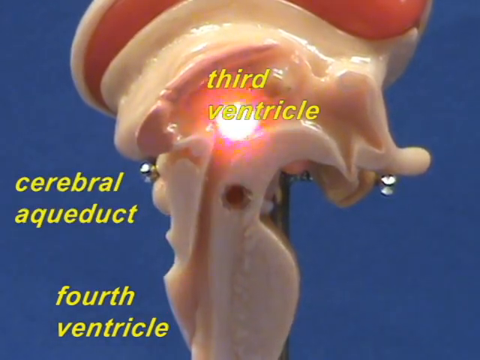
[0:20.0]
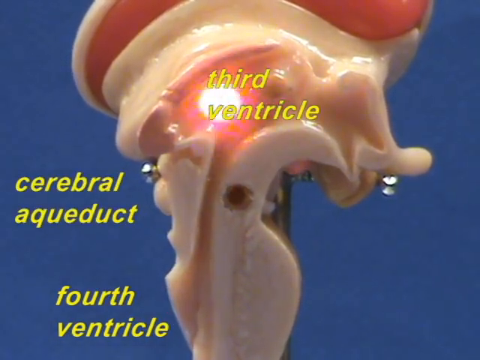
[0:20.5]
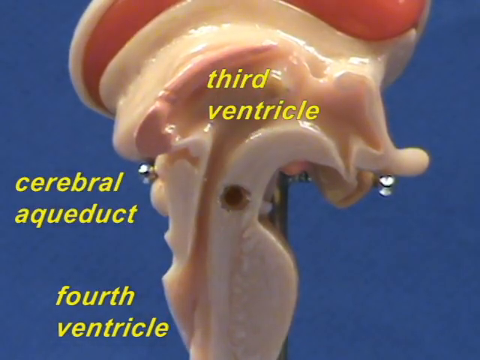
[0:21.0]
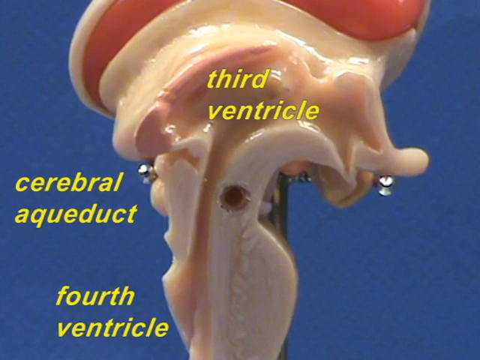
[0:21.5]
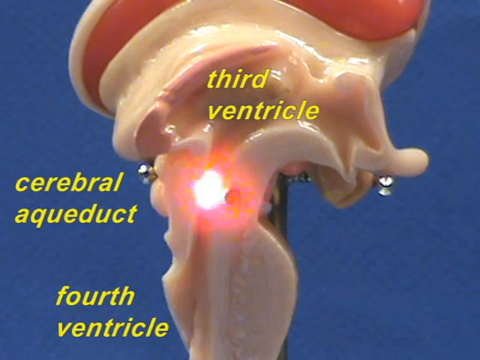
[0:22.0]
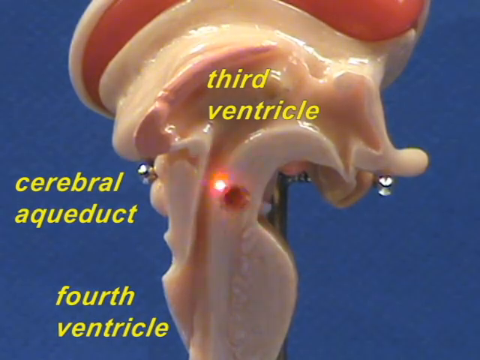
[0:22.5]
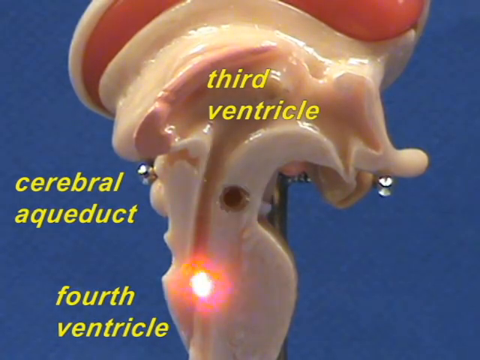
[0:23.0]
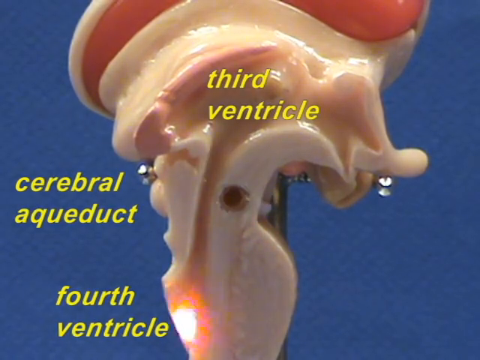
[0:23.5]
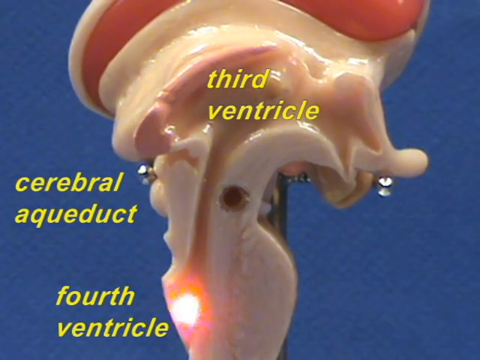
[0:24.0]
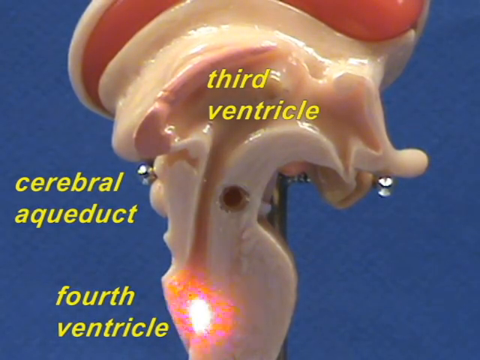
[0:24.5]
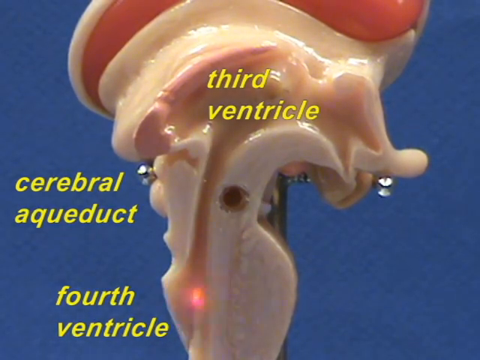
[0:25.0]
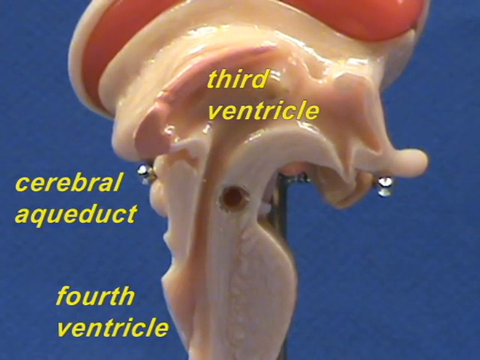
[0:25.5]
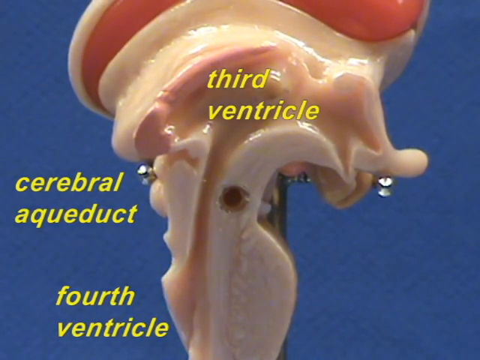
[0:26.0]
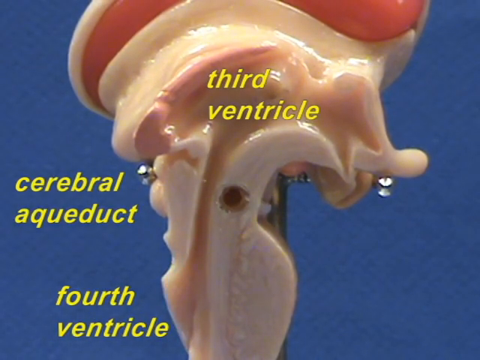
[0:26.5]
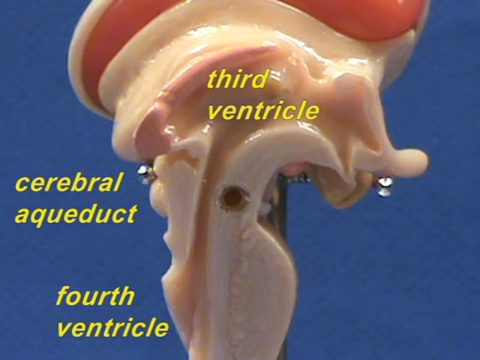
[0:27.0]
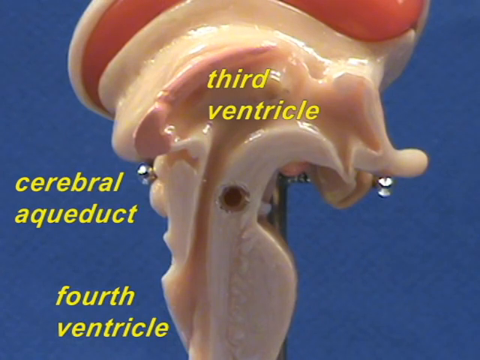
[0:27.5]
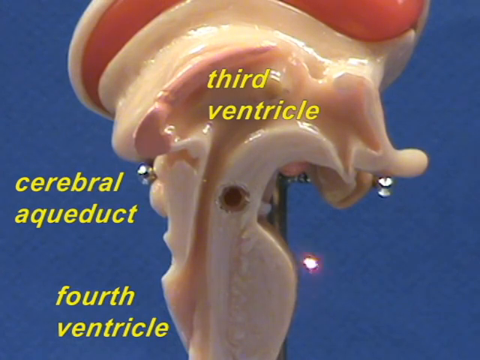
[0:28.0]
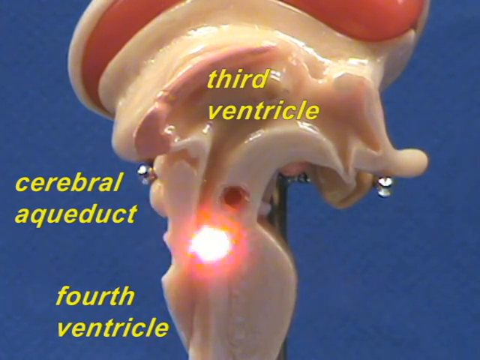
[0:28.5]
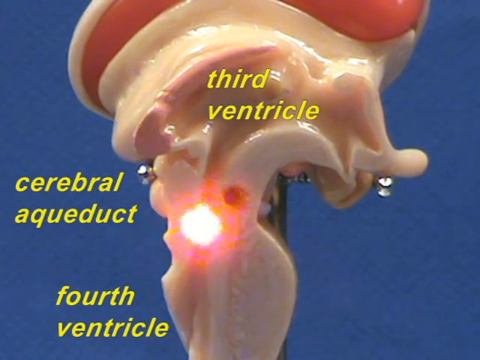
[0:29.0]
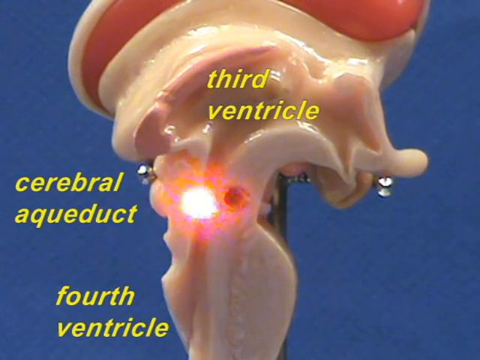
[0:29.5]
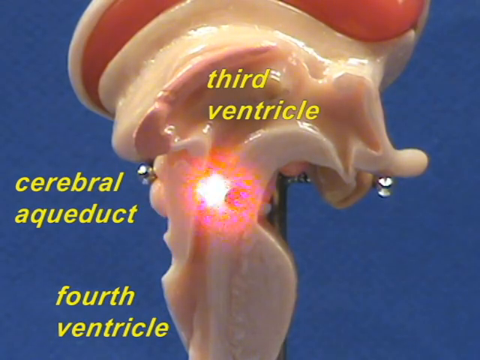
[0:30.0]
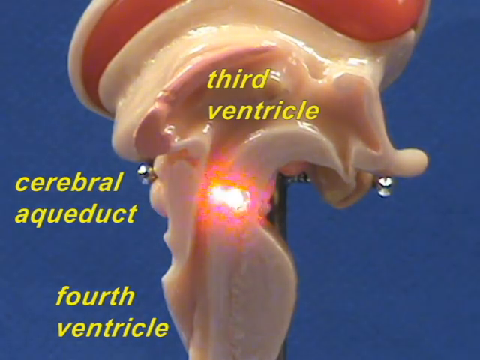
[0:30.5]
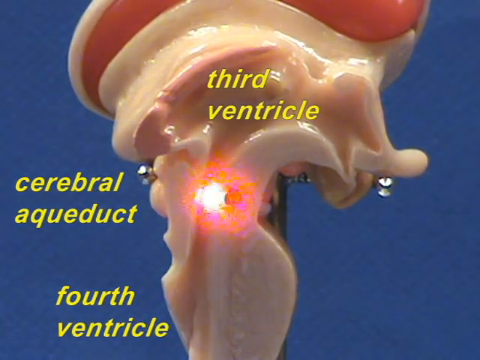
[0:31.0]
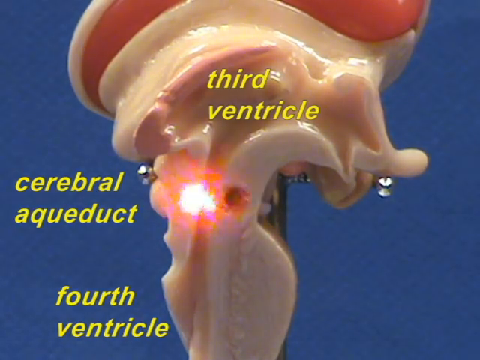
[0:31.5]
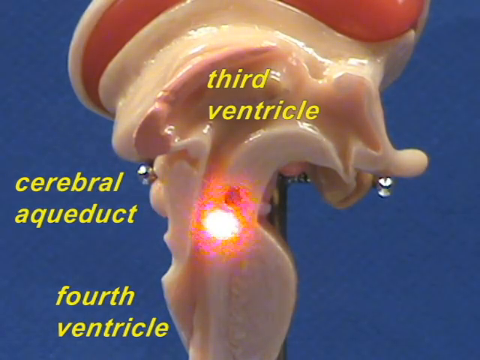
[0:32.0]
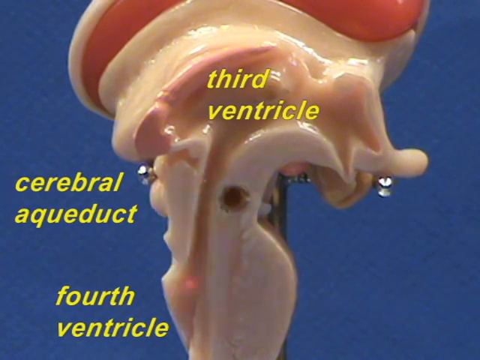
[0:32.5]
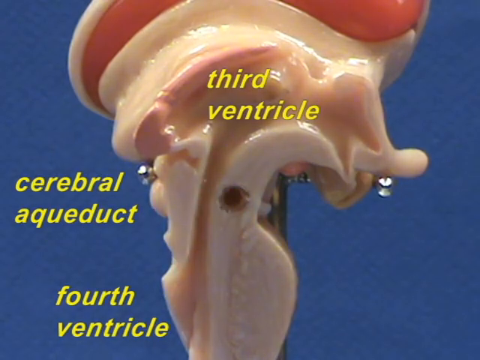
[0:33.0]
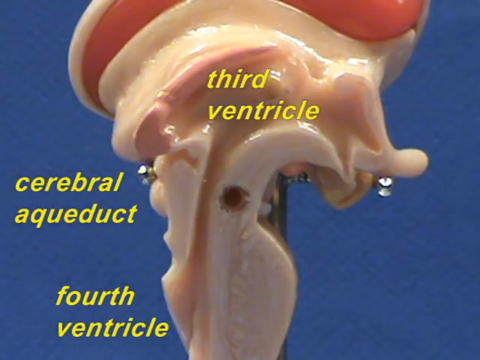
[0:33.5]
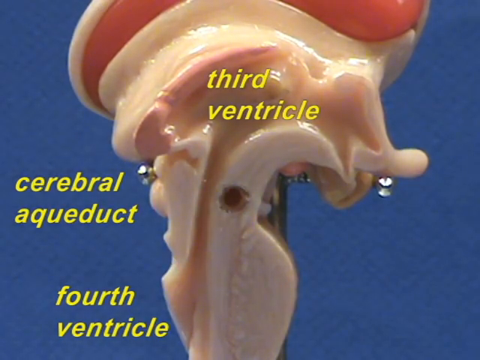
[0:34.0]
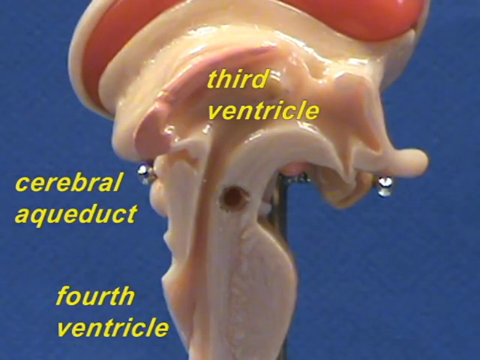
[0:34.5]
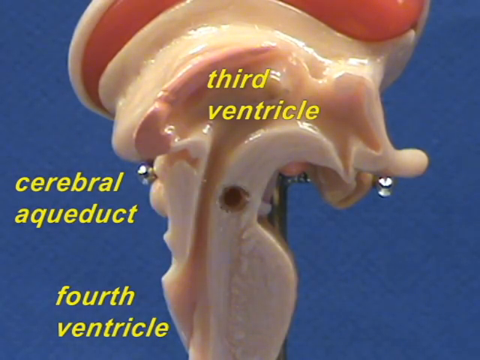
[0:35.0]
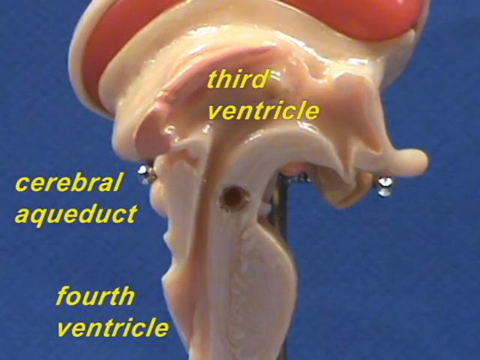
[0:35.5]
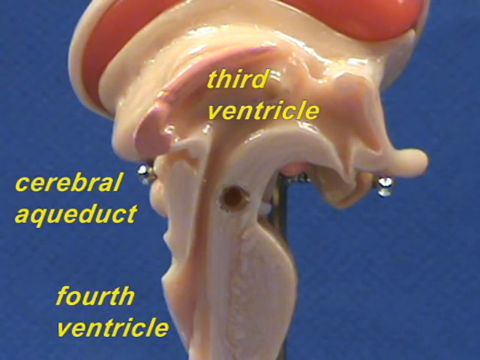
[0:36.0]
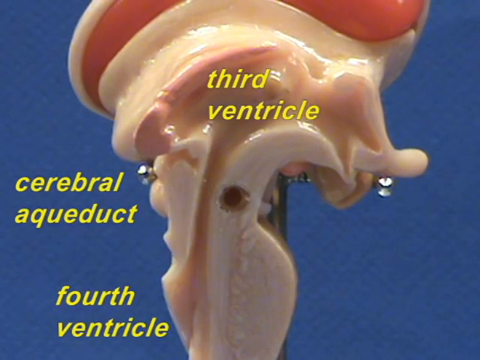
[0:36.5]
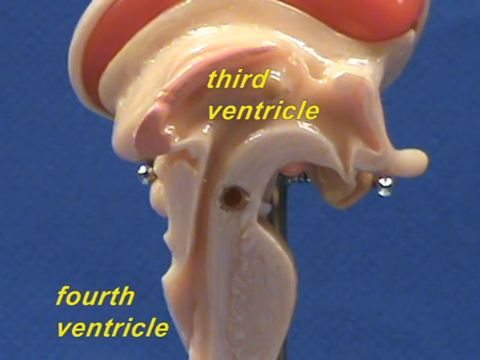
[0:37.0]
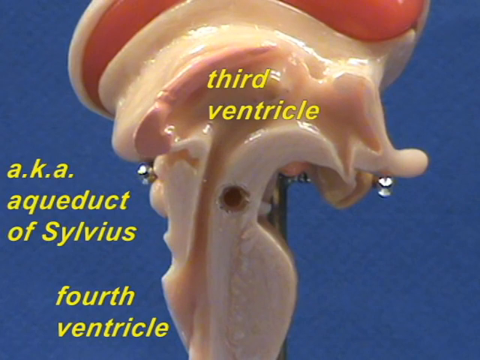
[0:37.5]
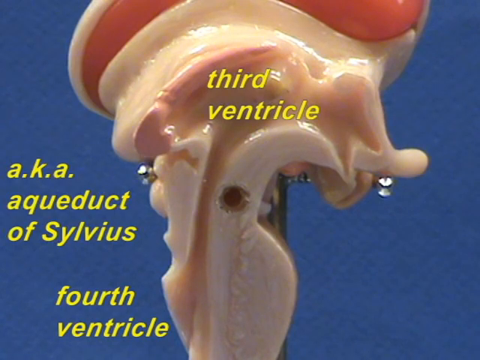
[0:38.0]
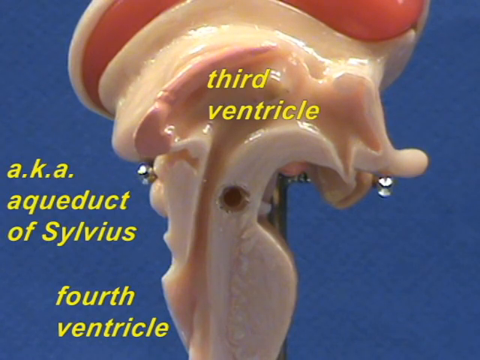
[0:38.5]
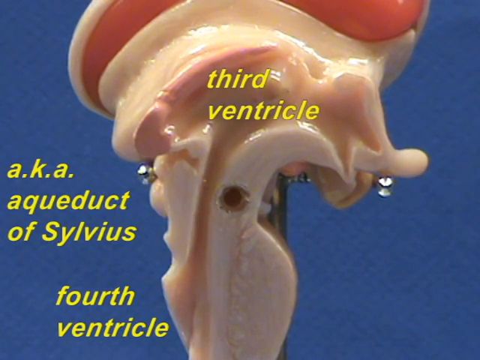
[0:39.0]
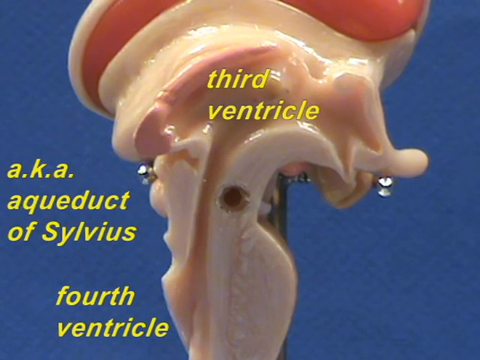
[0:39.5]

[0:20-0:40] Against the blue background is an unidentified body part, and a laser light is used to point out its different parts; as the light reaches a certain part, a text label is placed over it. The labels so far are "third ventricle", "cerebral aqueduct" and "fourth ventricle", and the small laser light keeps highlighting parts. One part looks like it belongs to the model's design rather than an actual part of the human body: it appears to be a small circular hole dug out. The text changes to something containing "aka" that disappears very quickly, while the light highlights right where the hole is. The "cerebral aqueduct" label goes away and the text then reads "aka Aqueduct of Silvius", with a capital S. The object appears to be held up by possibly a metal rod, with various screws keeping it in place.